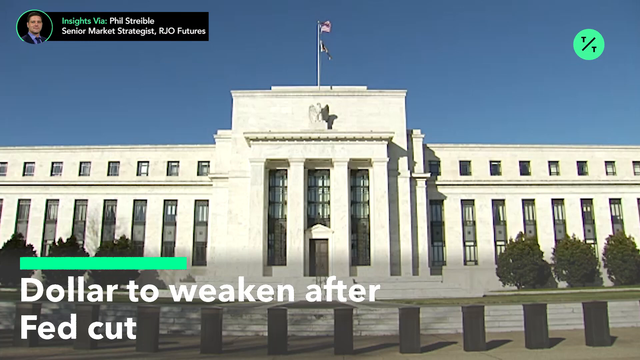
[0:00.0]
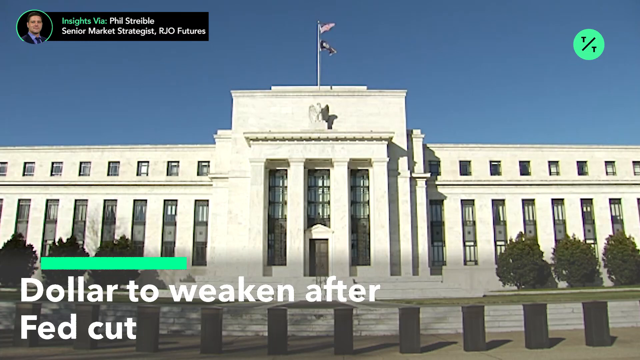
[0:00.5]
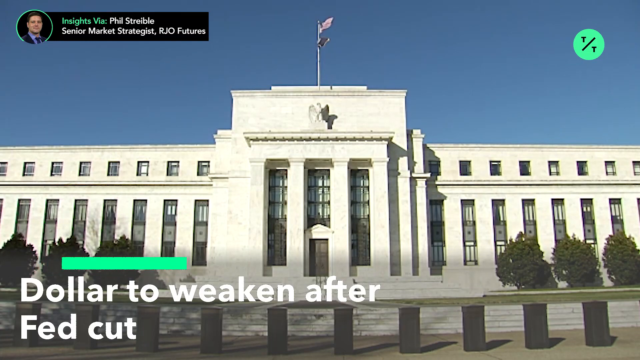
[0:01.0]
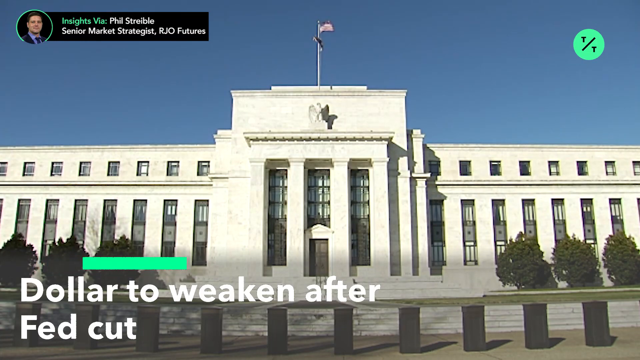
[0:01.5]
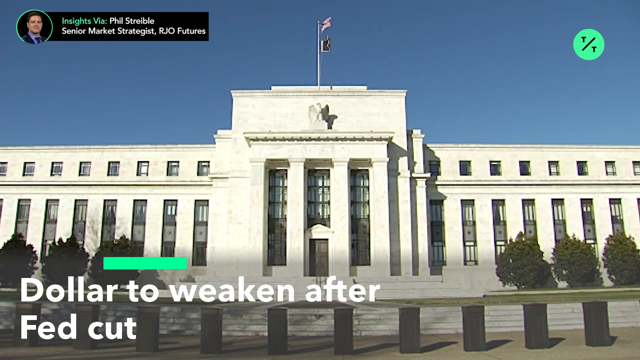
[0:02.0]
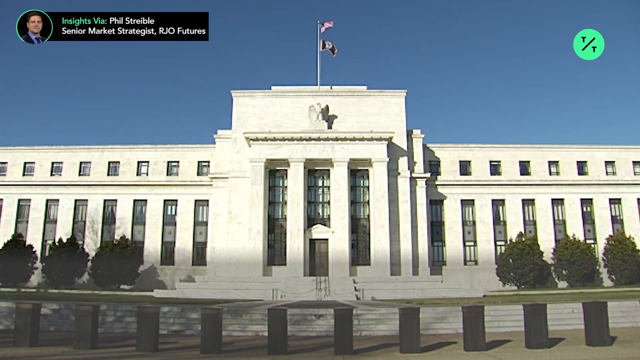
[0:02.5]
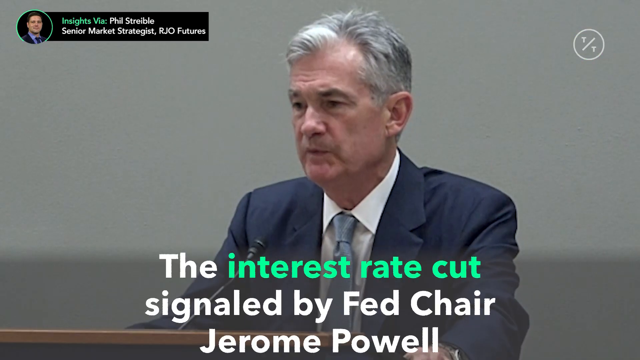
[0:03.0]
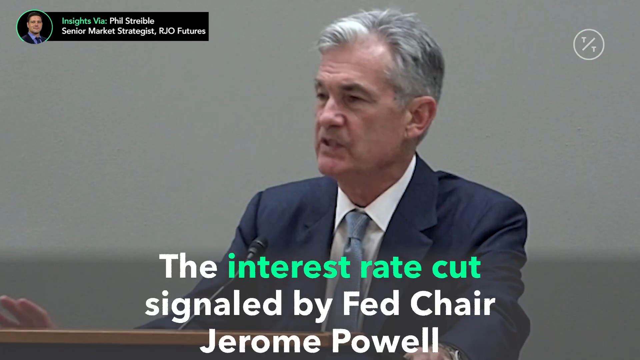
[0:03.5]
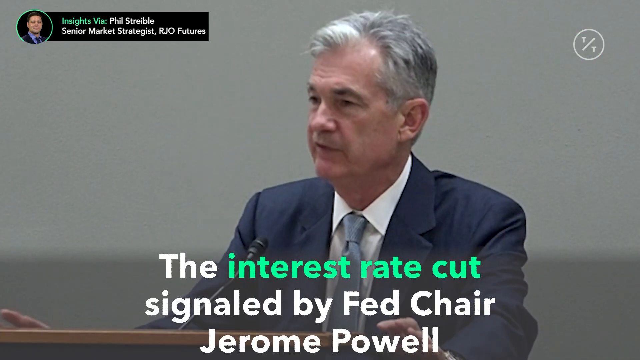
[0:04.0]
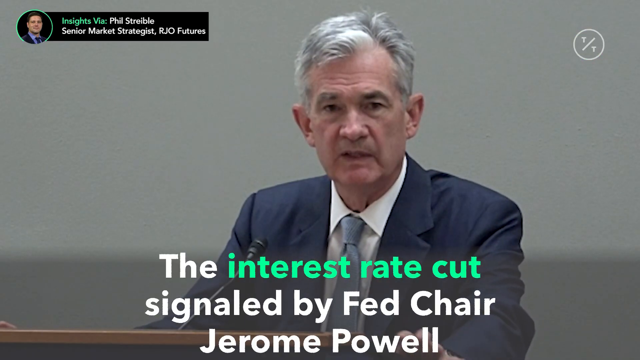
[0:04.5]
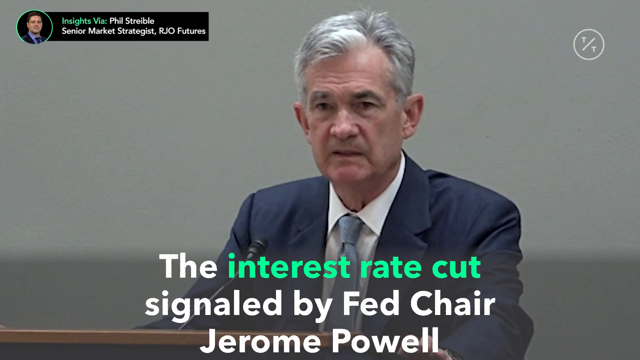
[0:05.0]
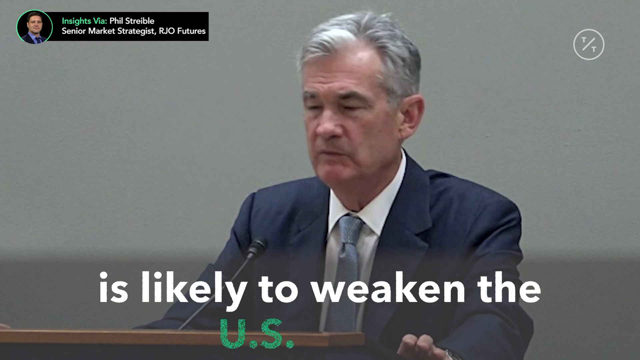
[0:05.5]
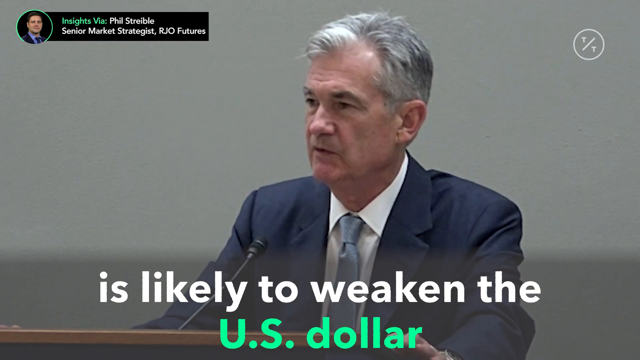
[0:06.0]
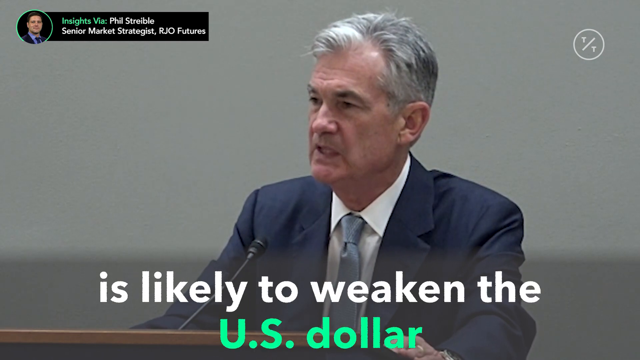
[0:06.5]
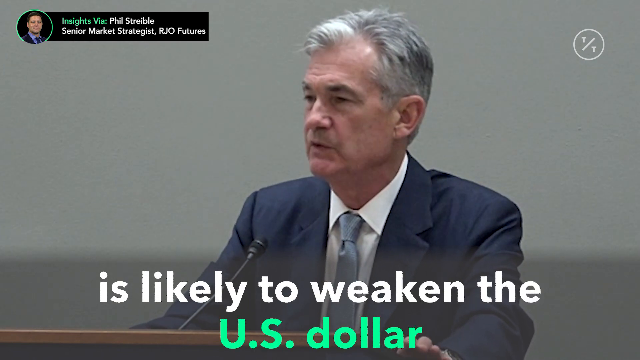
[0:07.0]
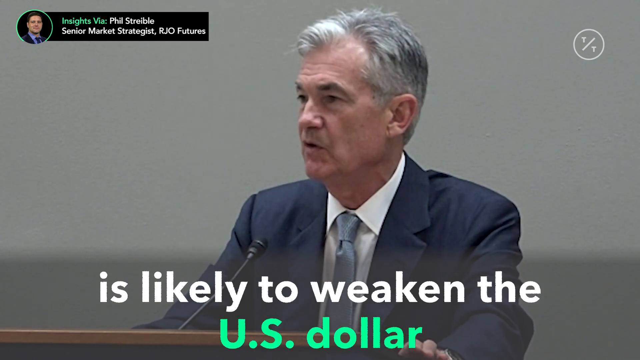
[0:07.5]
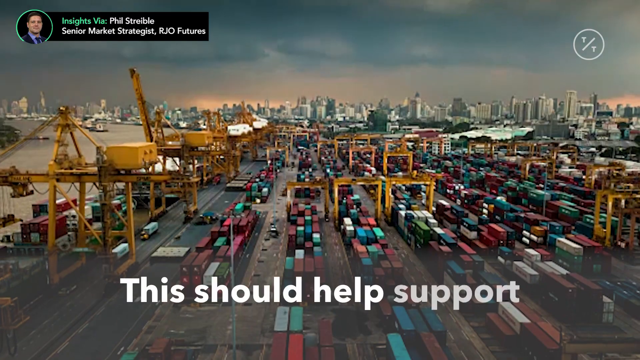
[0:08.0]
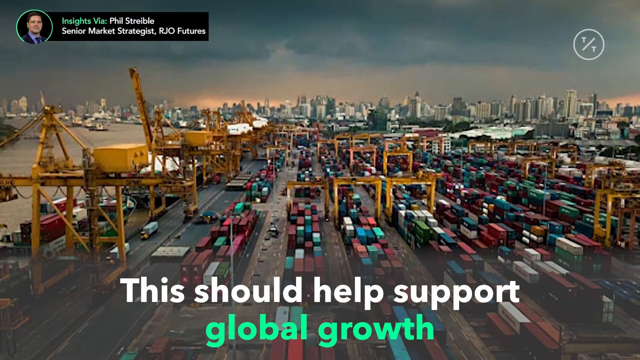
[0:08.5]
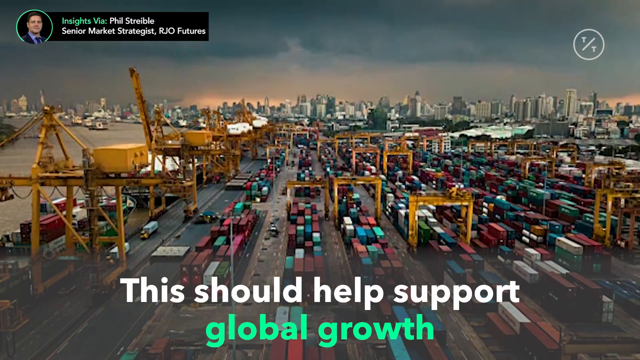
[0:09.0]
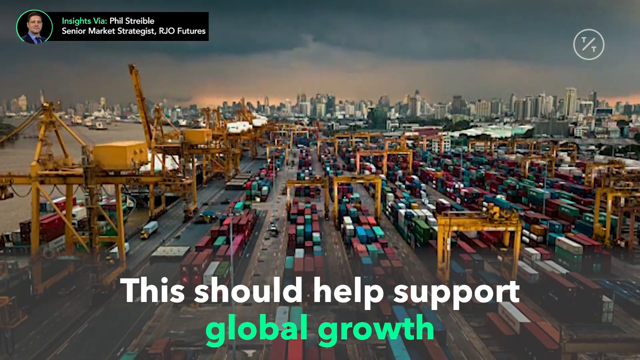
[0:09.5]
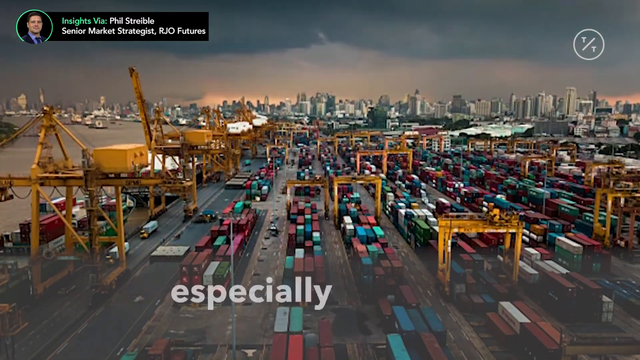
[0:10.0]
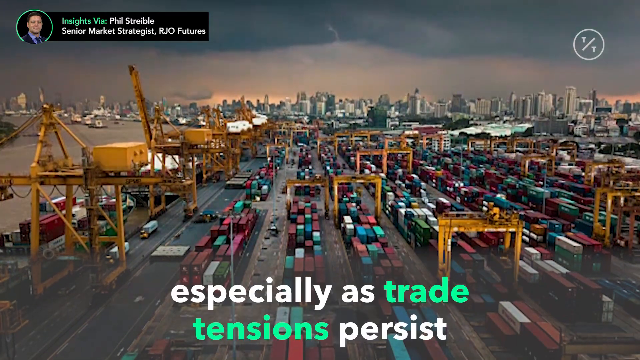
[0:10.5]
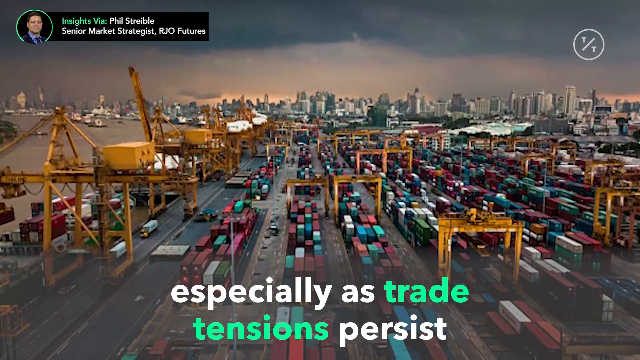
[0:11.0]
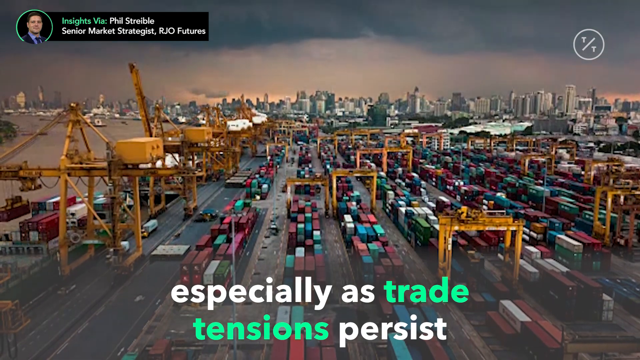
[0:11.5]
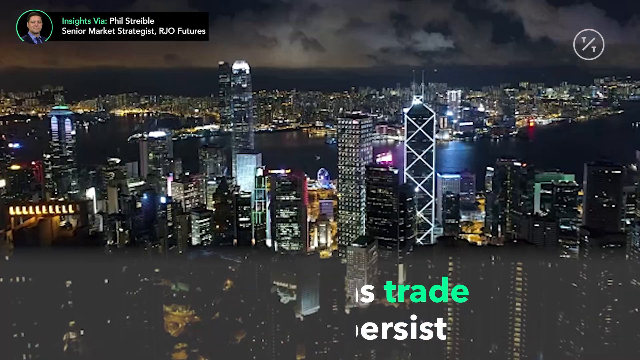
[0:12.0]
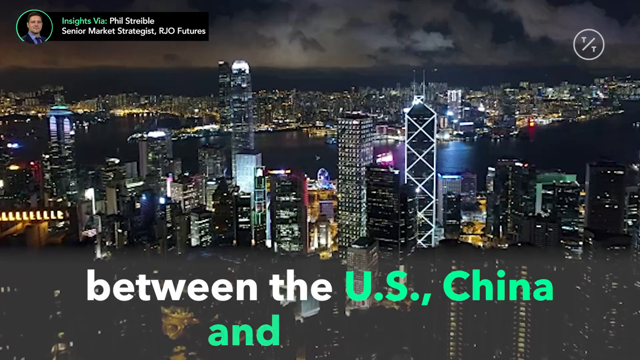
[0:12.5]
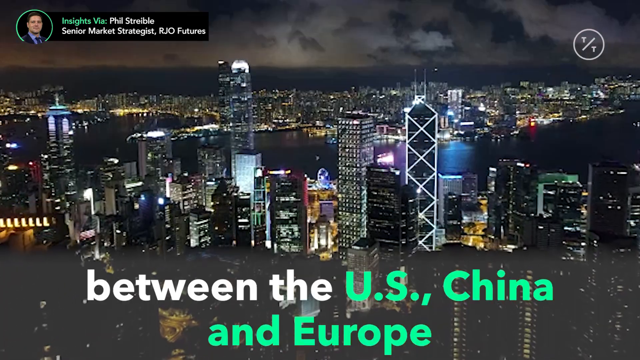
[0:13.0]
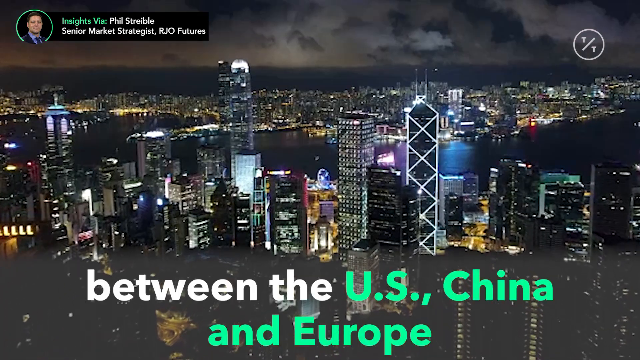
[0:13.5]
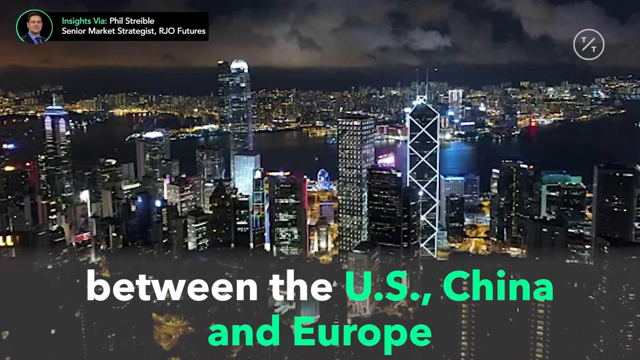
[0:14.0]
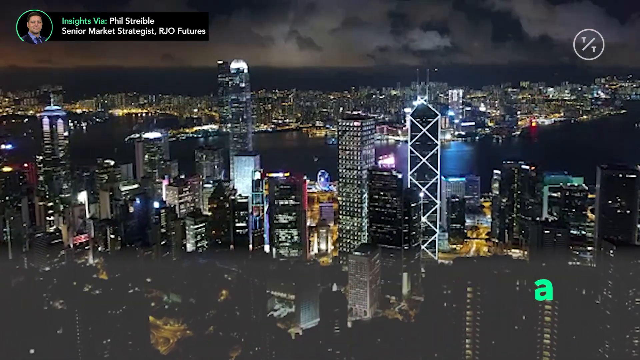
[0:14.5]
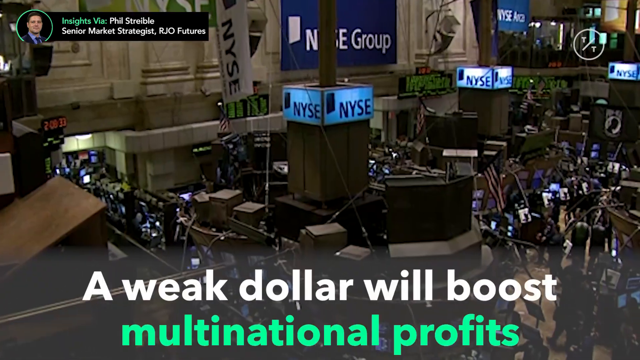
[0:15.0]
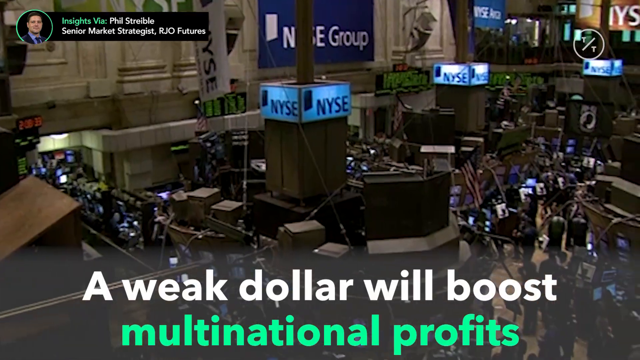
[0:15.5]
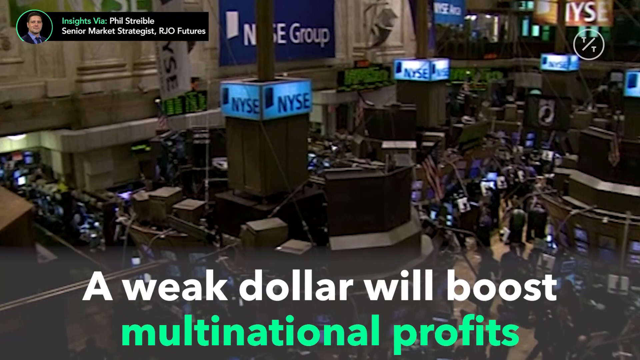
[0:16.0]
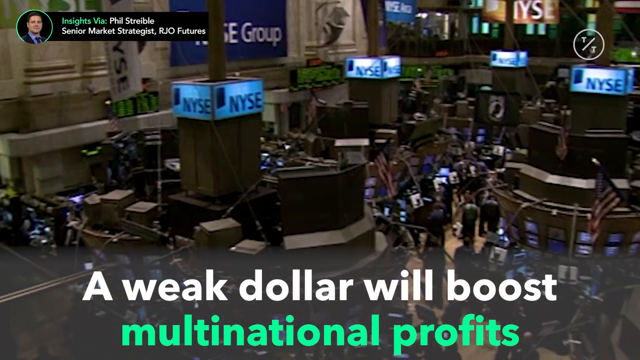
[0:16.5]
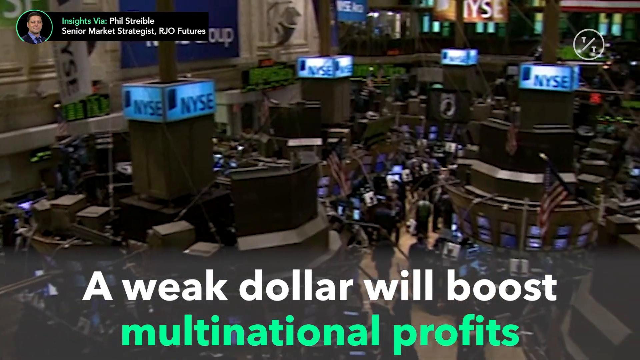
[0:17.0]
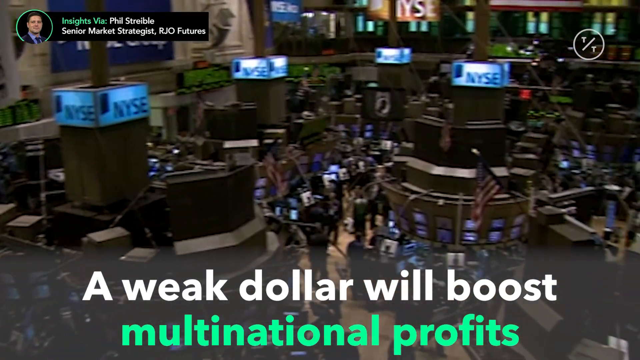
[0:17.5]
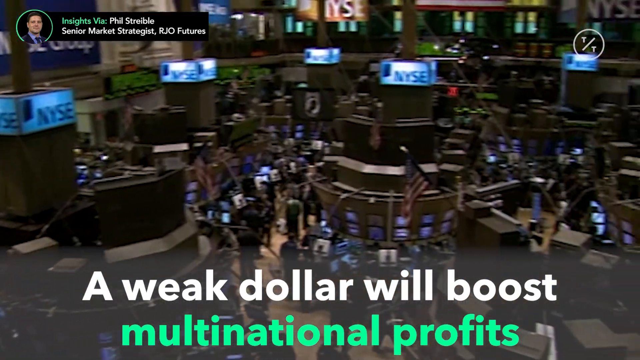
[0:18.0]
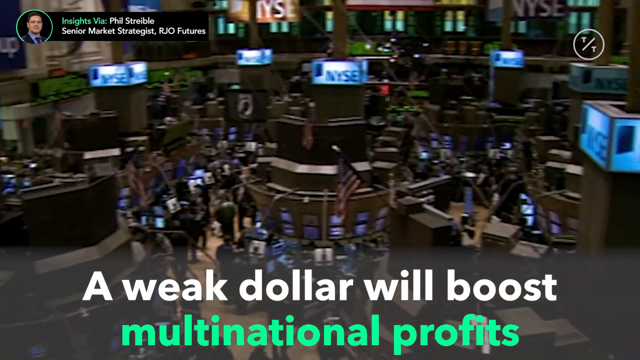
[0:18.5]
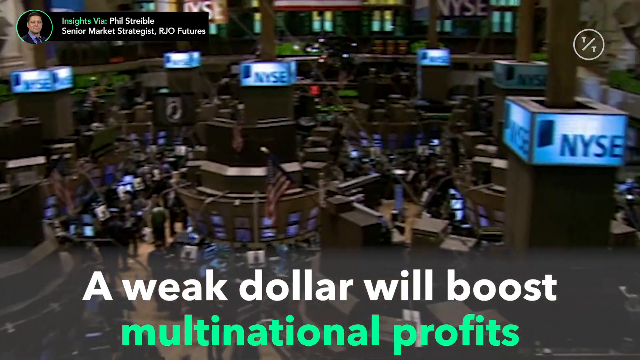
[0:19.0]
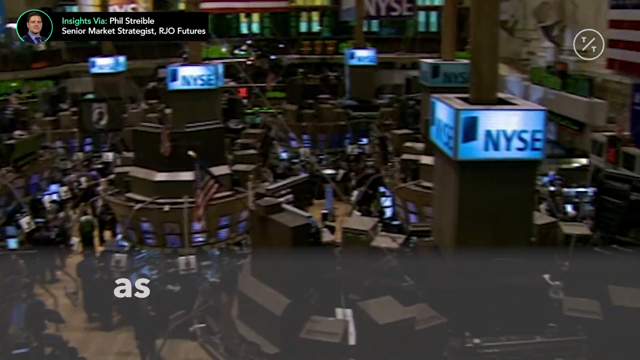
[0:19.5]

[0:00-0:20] A government building with the American flag at the very top appears. In the top left, "Insights Via" is written in green, followed by "Phil Streible, Senior Market Strategist of RJO Futures," with an image of him to the left. Below, text reads "dollar to weaken after cut." The scene quickly changes to an older man sitting down in a gray suit, with the text "the interest cut rate signaled by Fed chair is likely to weaken the U.S. dollar." Next comes a scene of cargo freights and moving pieces within that area, with "especially as trade tensions persist" at the bottom. It then changes to drone footage of a city, zooming in slowly on it, with half-white, half-green text reading "between the U.S., China, and Europe," followed by "a weak dollar will boost multinational profits." What looks like an office environment appears next, with "NYSE" on screen.